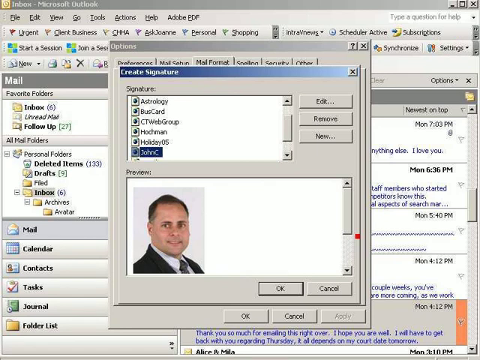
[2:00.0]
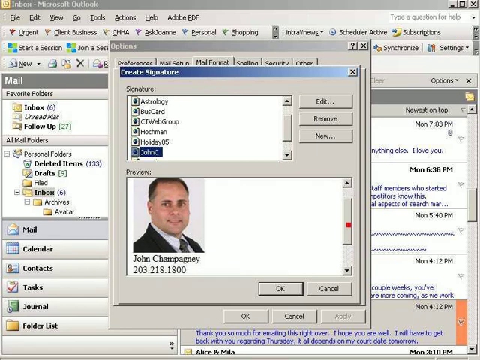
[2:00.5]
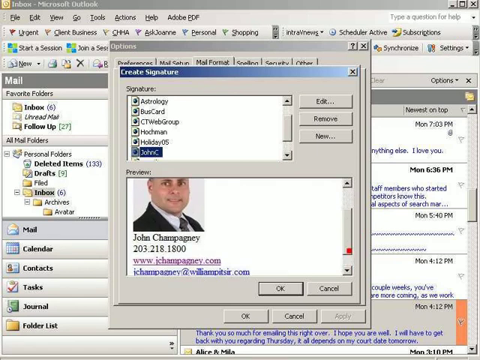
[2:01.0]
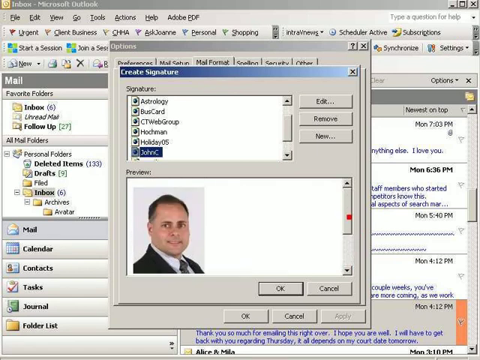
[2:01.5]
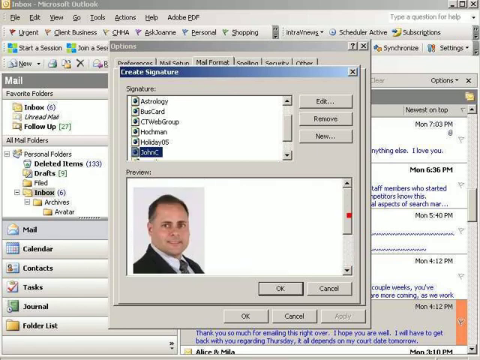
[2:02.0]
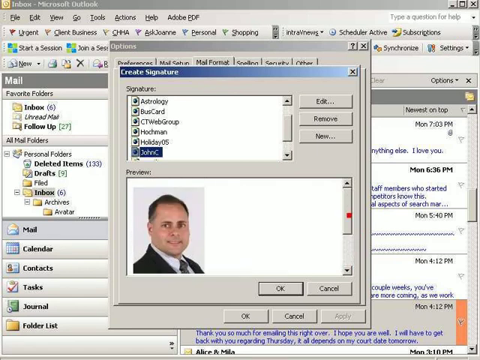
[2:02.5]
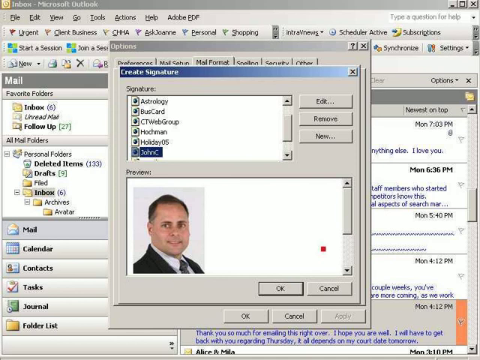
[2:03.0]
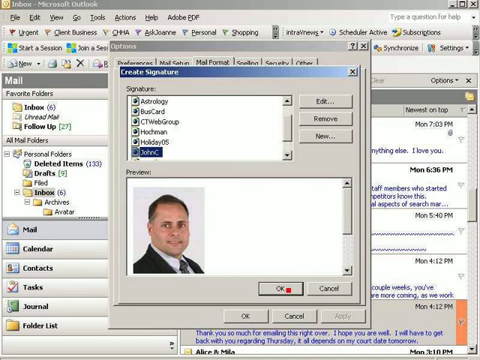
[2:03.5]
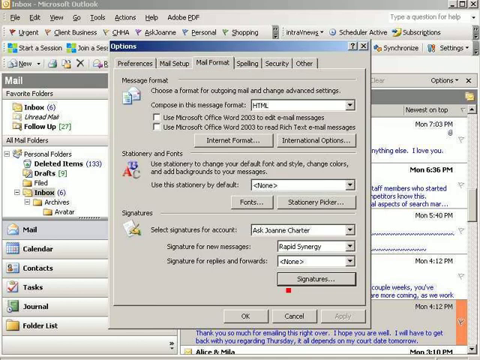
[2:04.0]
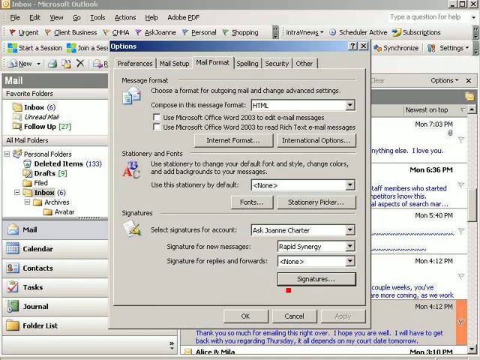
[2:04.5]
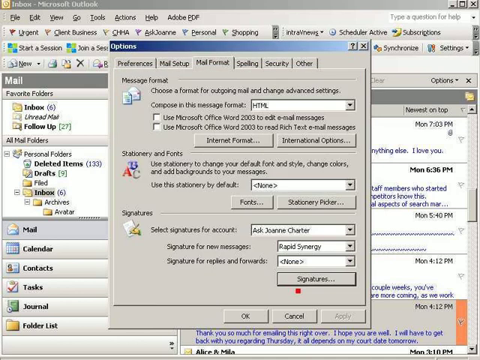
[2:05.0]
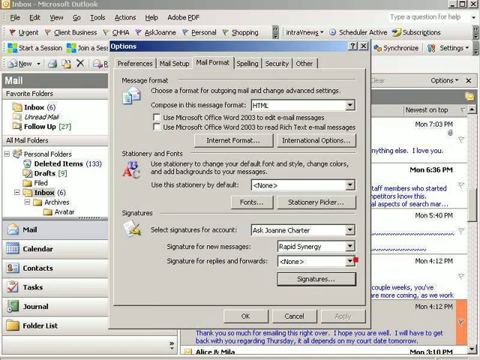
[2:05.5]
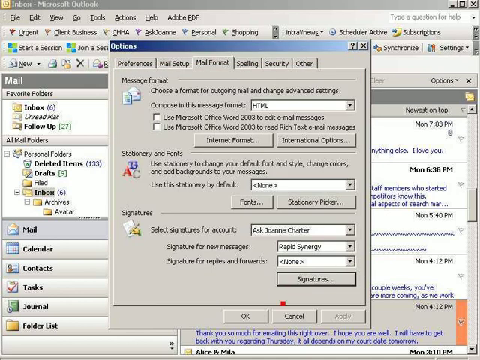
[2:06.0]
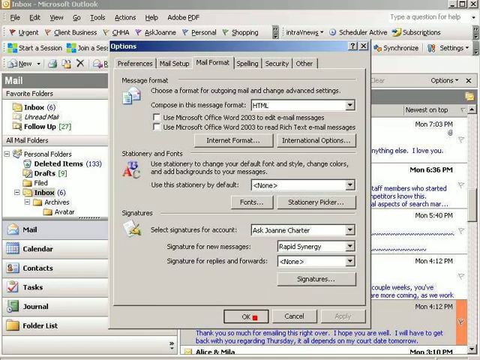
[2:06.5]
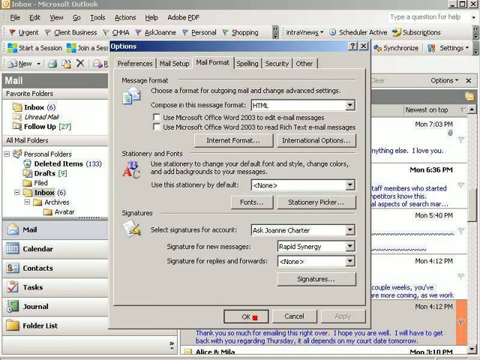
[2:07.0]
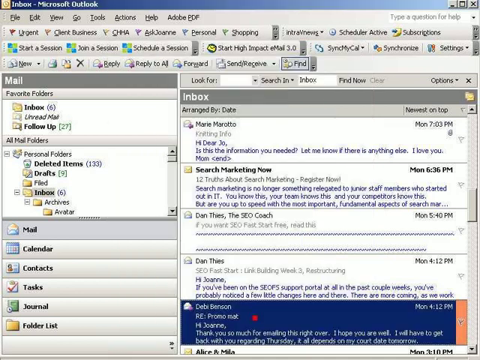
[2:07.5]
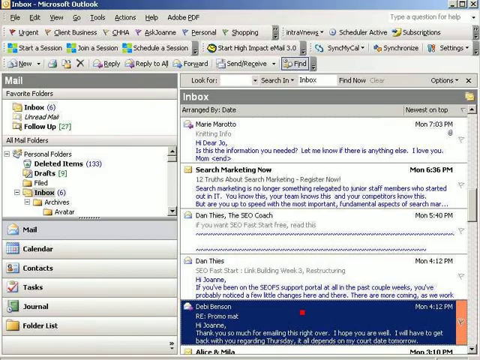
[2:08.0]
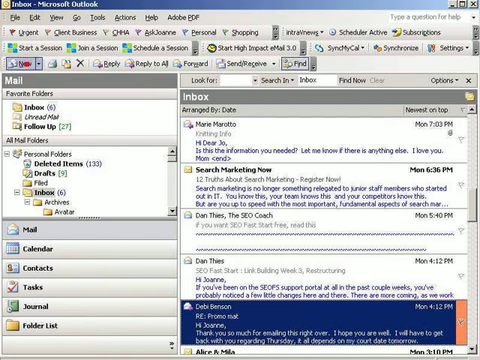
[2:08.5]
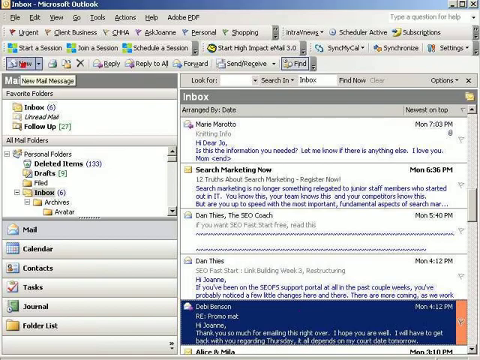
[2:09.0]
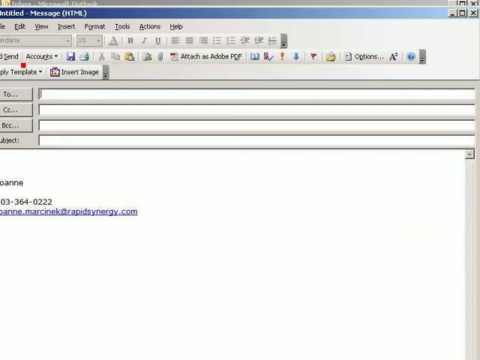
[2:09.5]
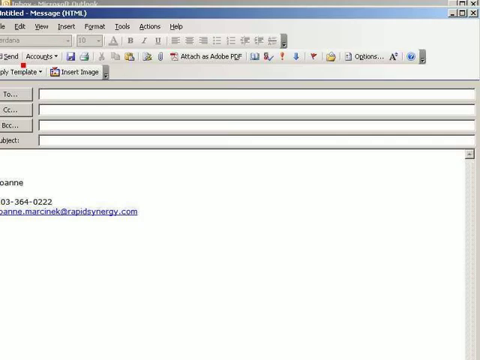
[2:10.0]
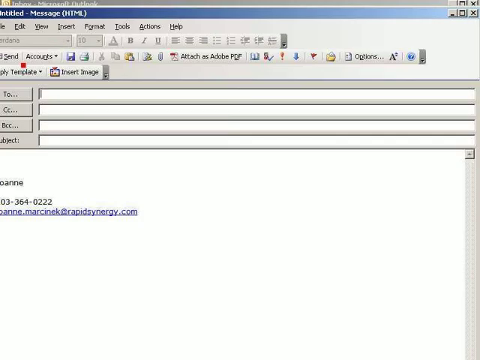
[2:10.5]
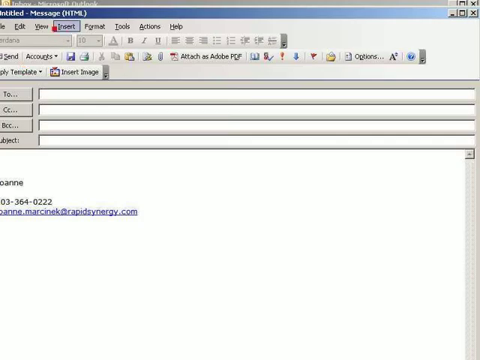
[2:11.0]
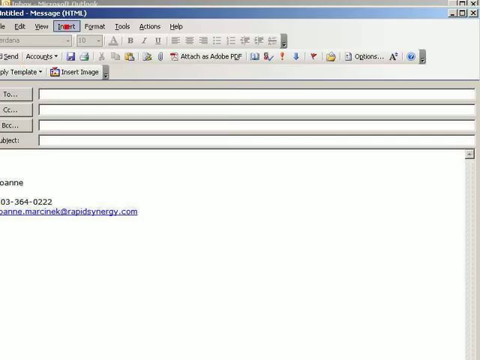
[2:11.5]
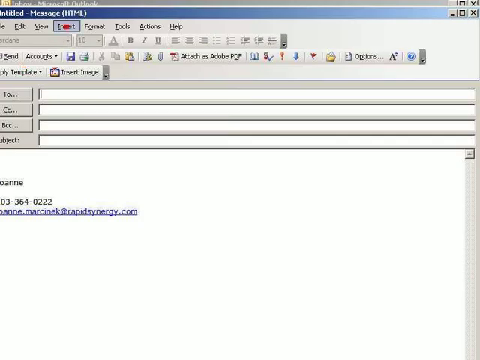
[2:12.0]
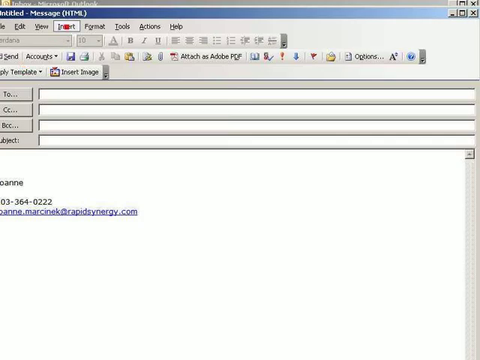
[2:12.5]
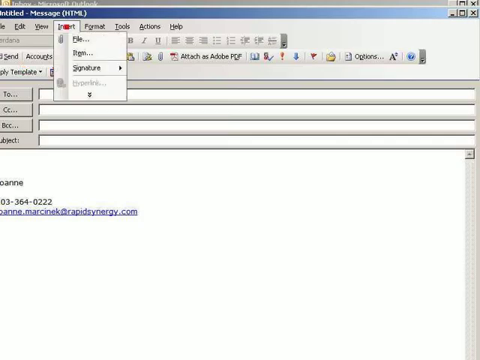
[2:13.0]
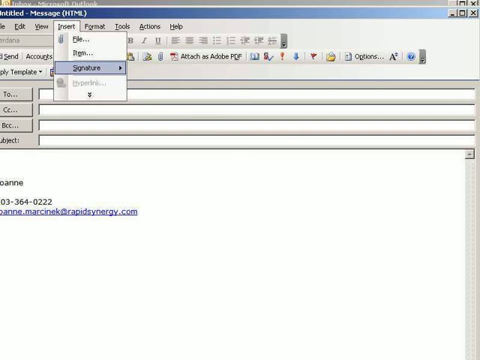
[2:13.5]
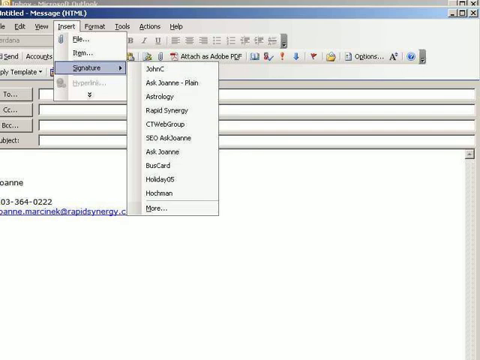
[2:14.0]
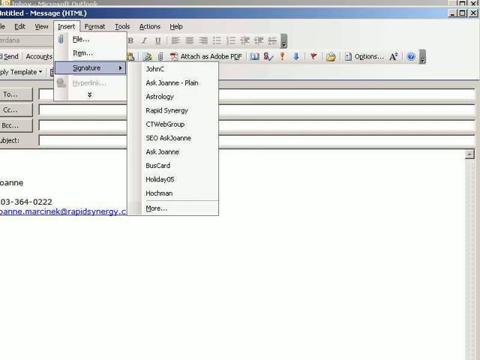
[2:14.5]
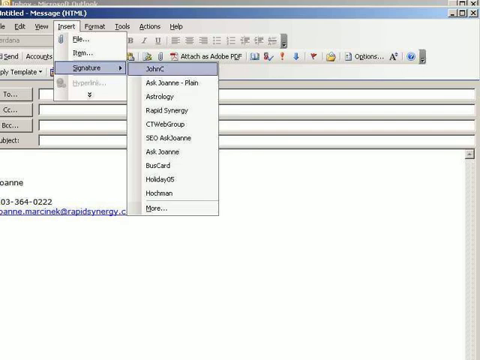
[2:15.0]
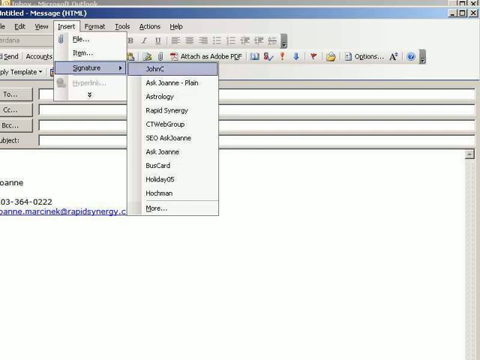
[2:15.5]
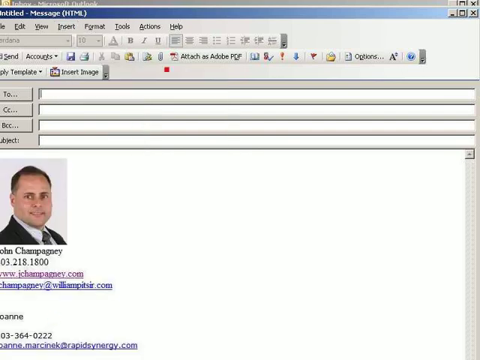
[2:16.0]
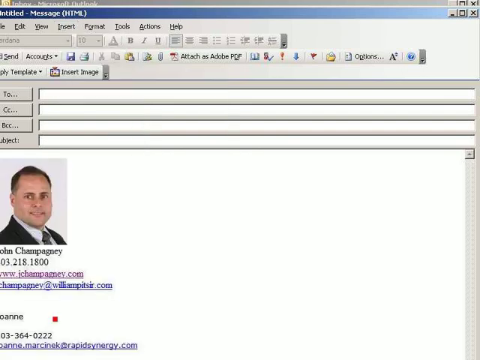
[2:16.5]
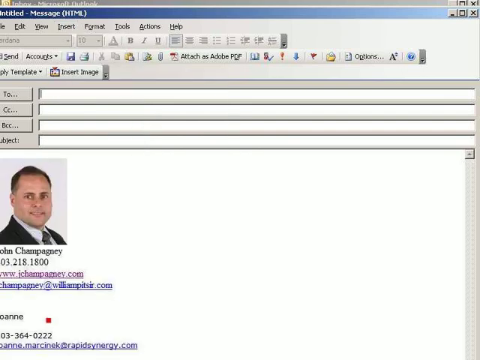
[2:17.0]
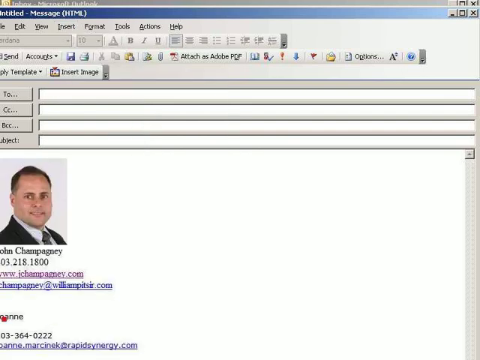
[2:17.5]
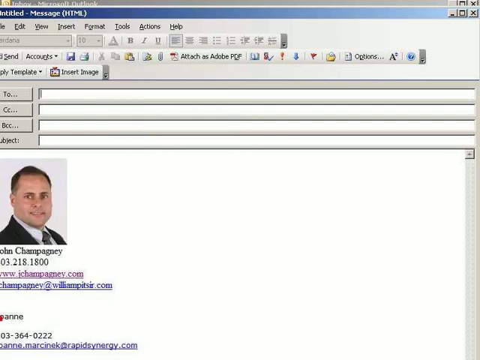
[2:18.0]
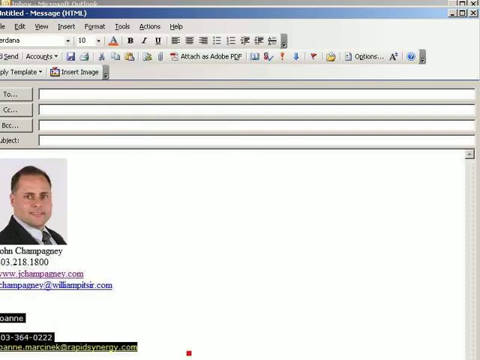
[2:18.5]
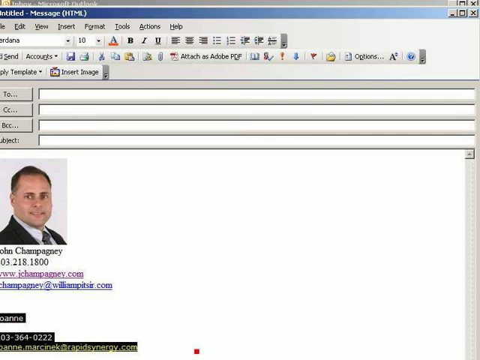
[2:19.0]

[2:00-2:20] The newly created signature is shown and selected to be used. The user exits the signatures pop-up menu and is back on the Microsoft Outlook inbox main page. A new message is brought up, showing the original Rapid Synergy signature of Joanne. Then Insert, Signature, "John C" is selected, and the other signature is removed.